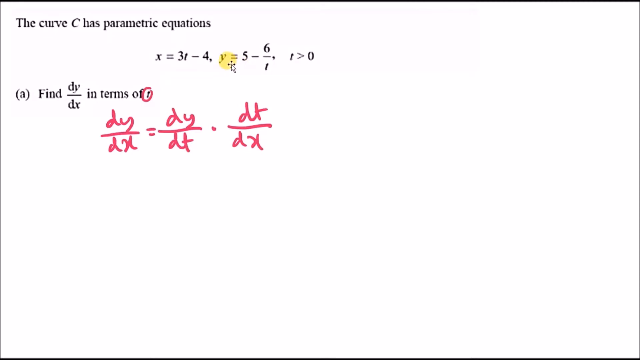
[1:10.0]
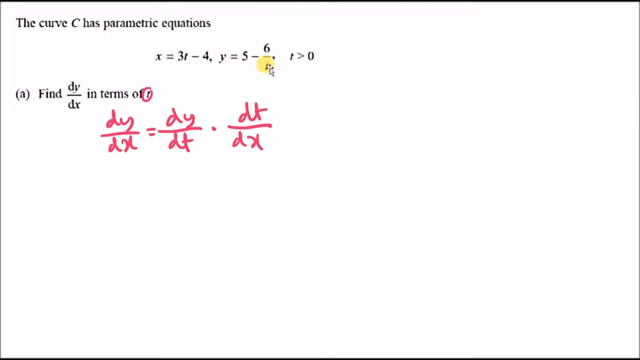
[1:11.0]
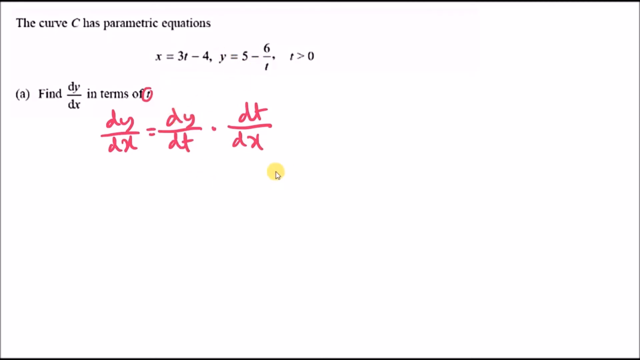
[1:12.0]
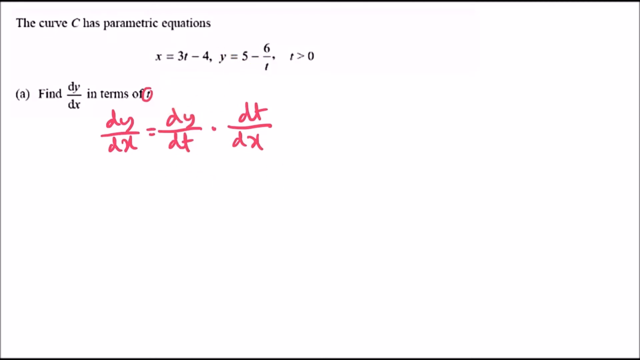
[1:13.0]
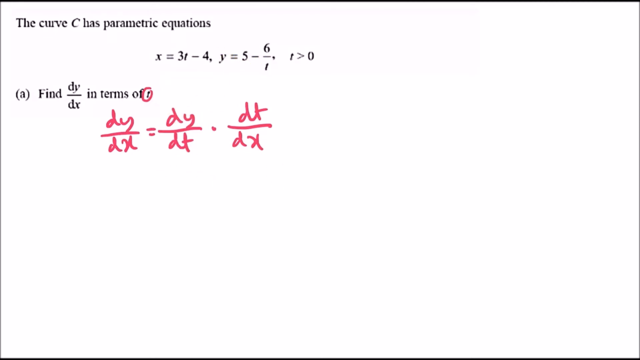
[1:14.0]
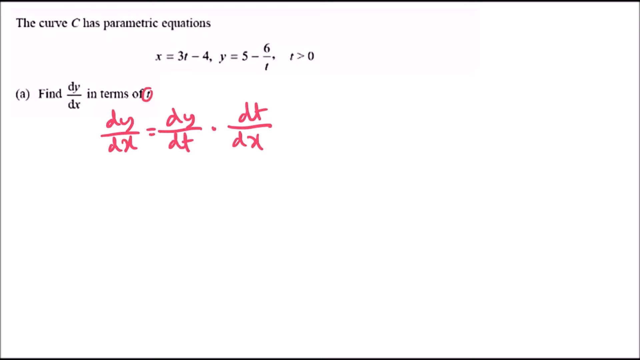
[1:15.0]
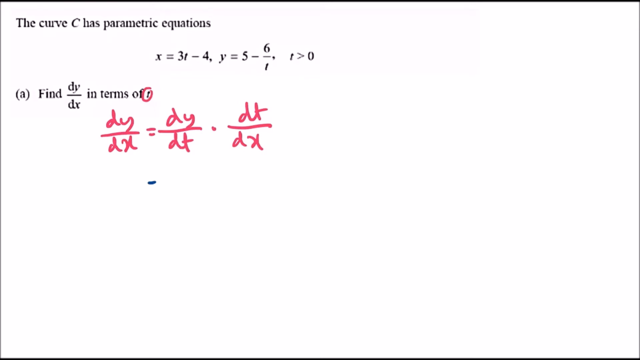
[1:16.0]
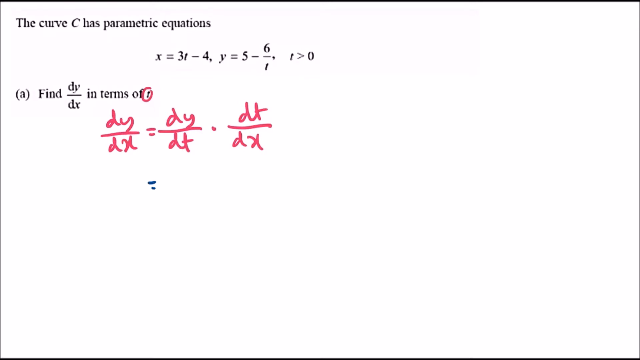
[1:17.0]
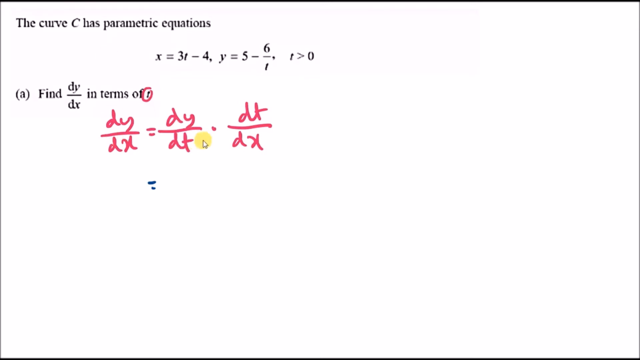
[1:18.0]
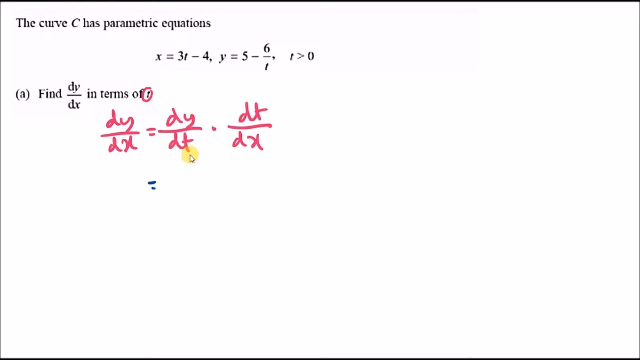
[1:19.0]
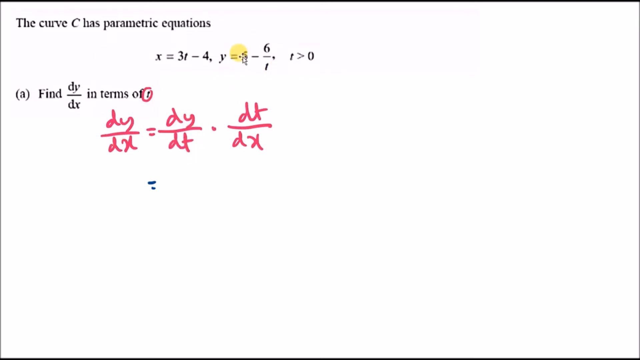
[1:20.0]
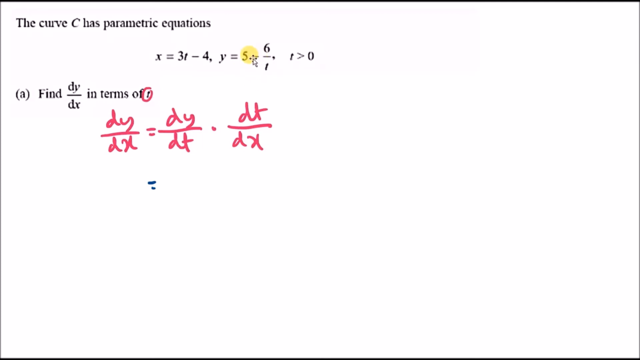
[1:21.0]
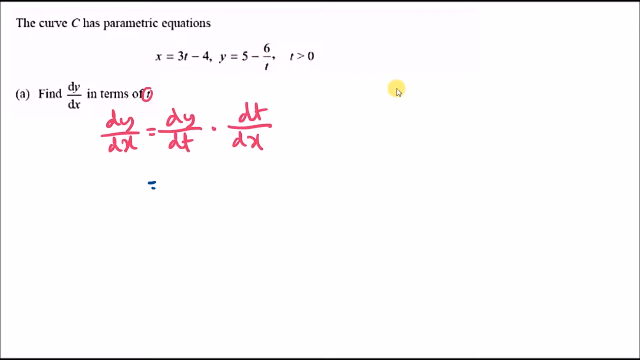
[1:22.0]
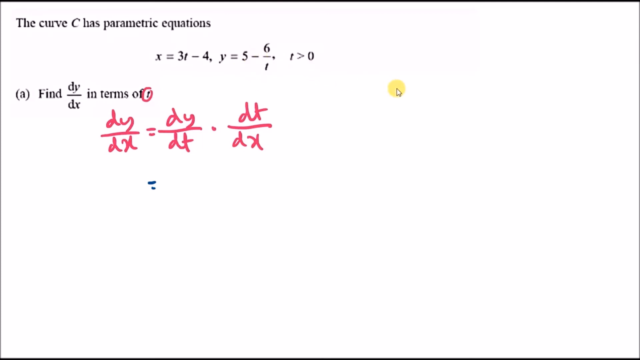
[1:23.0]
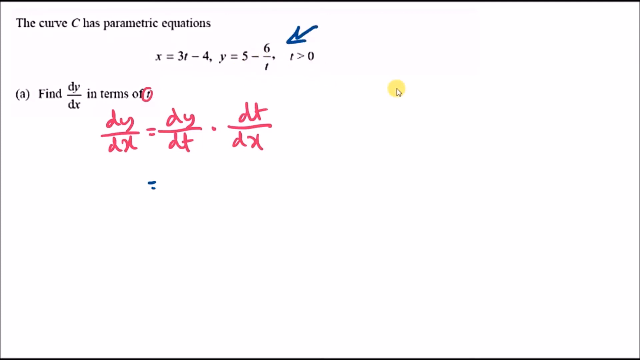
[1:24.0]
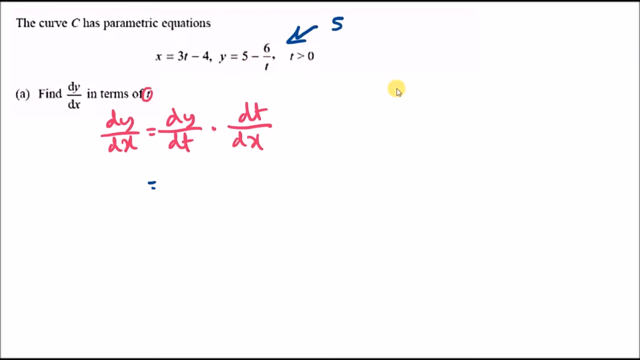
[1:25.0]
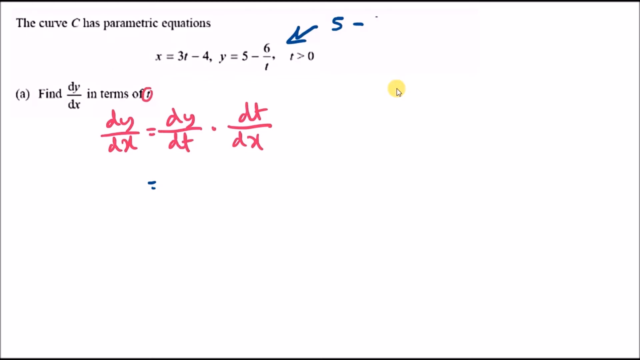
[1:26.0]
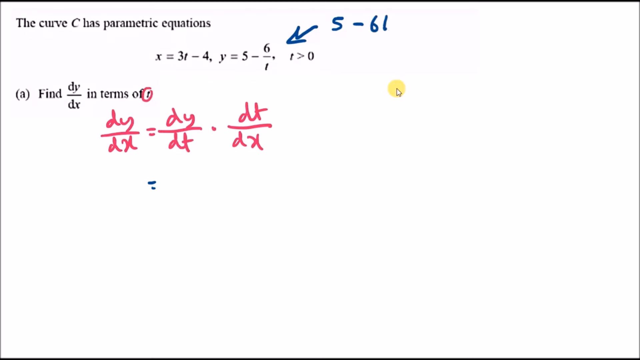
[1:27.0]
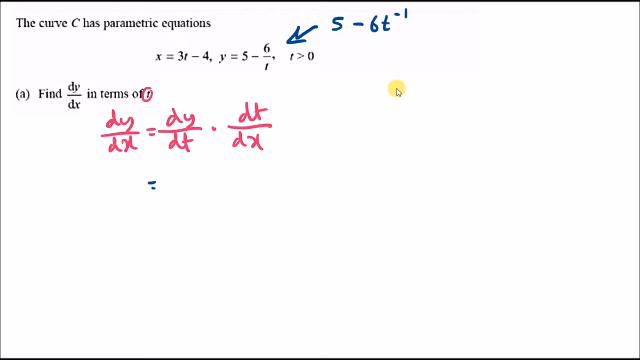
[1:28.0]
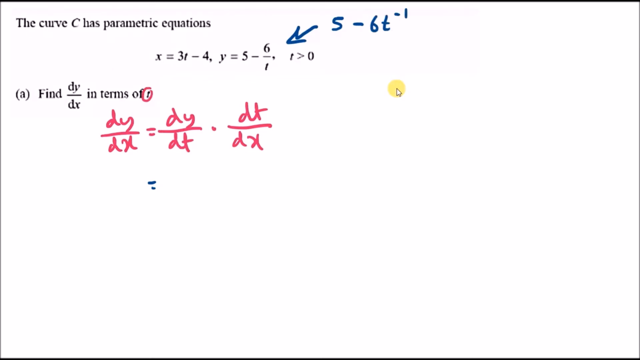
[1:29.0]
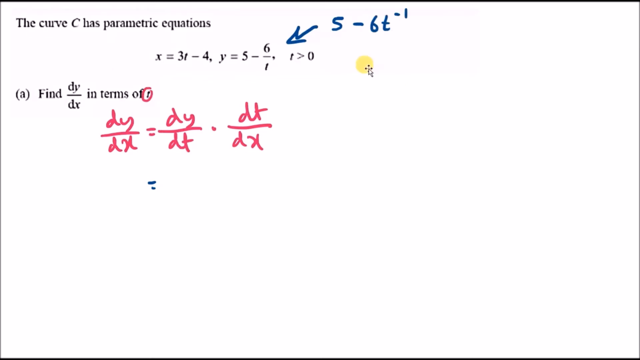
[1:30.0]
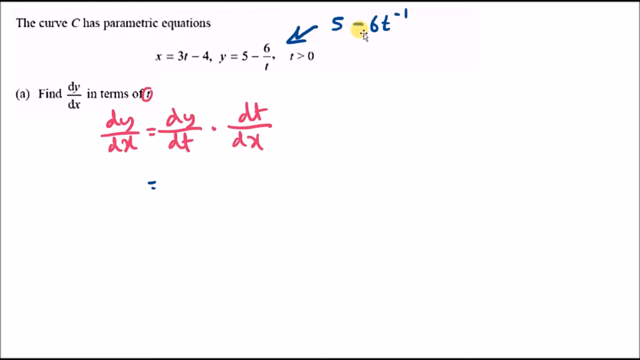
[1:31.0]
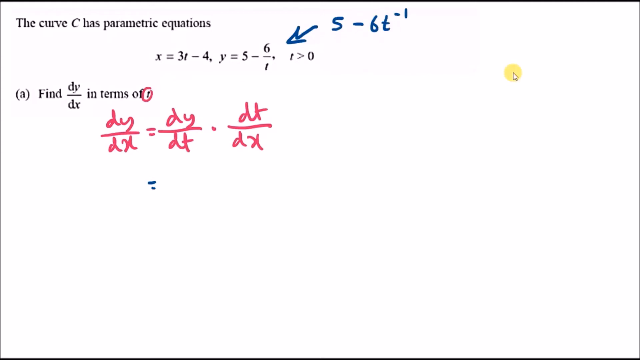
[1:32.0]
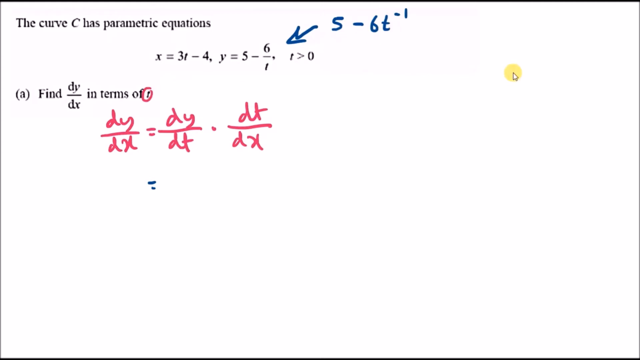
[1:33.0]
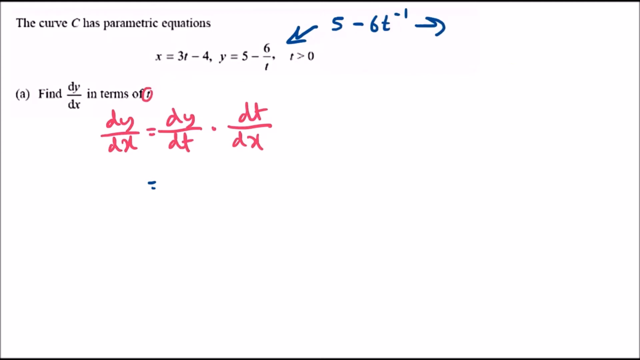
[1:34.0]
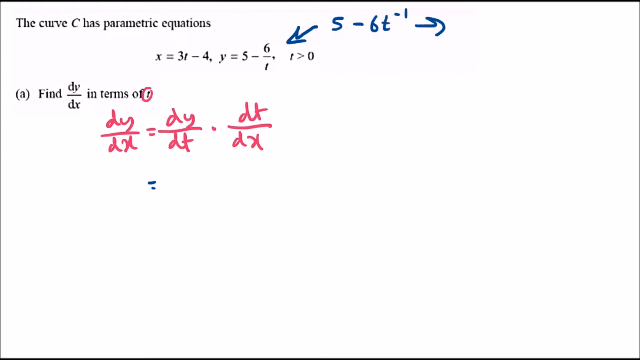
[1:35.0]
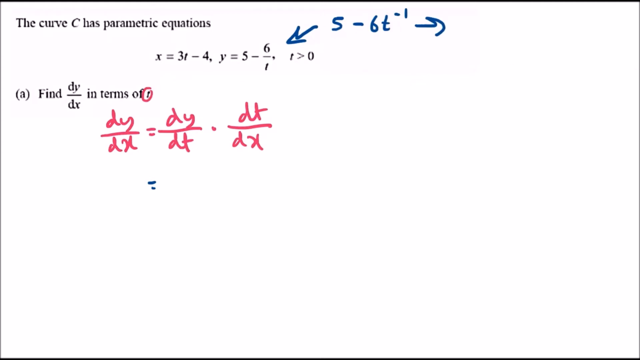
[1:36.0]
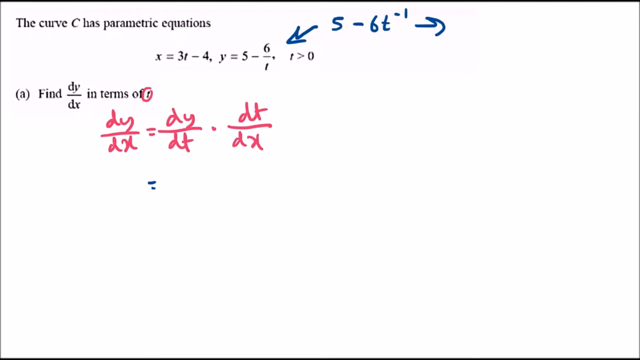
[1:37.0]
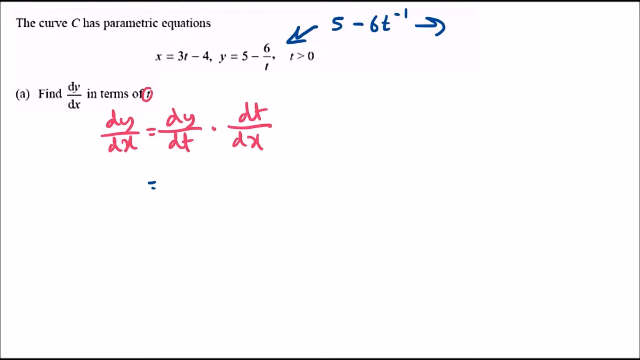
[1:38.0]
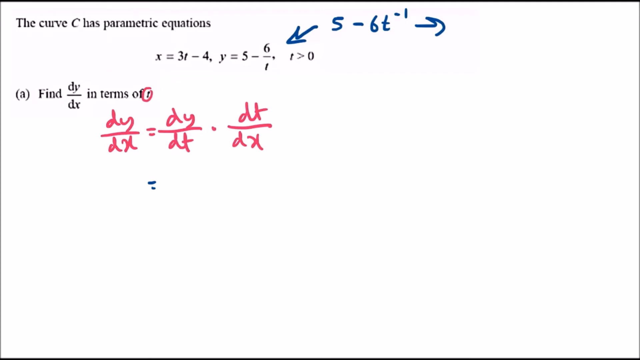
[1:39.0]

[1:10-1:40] The math question asks to find dy over dx in terms of t and provides parametric equations for the curve C. In pink marker, dy over dx equals dy over dt beside dt over dx is written, and the letter t in the question is circled in pink. The cursor circles different parts of the question, primarily the given parametric equation y =, and circles the y in the written formula, seeming to connect the two. Switching to blue marker, an equals sign is written below the first equation. Then, up at the question where it says y = 5 - 6/t, 5 - 6t to the power of negative 1 is written with an arrow beside it.